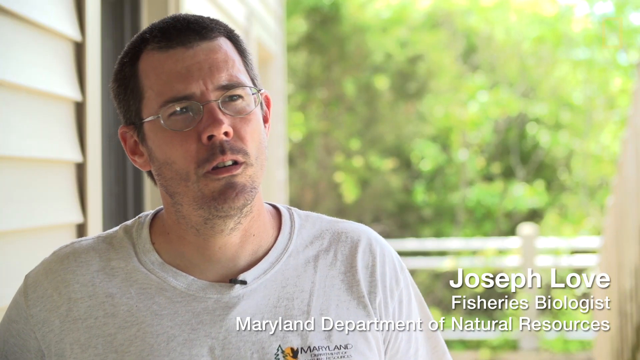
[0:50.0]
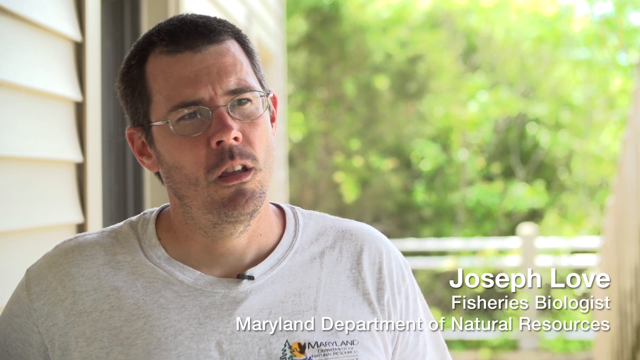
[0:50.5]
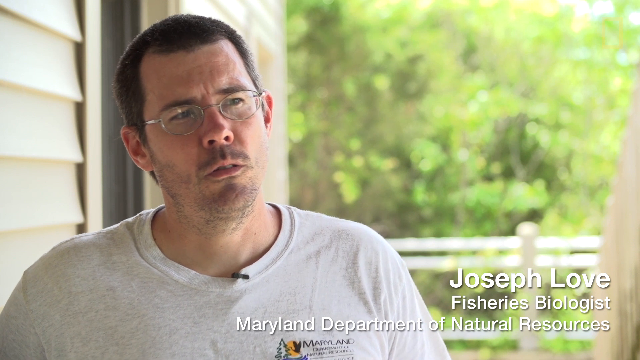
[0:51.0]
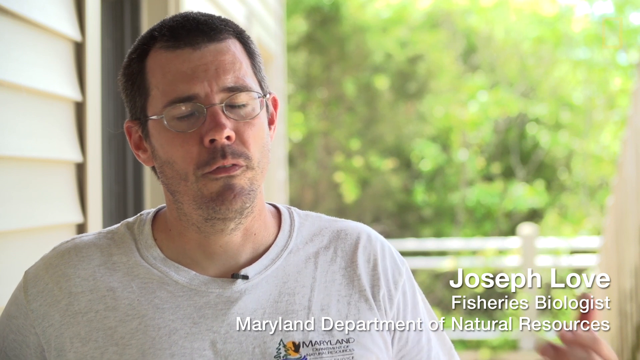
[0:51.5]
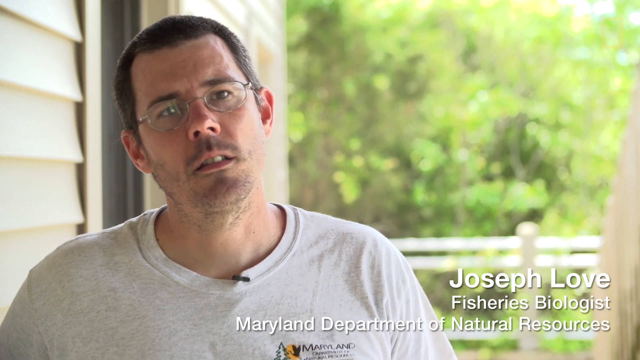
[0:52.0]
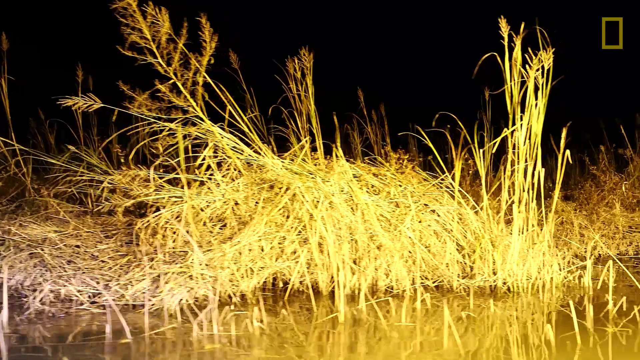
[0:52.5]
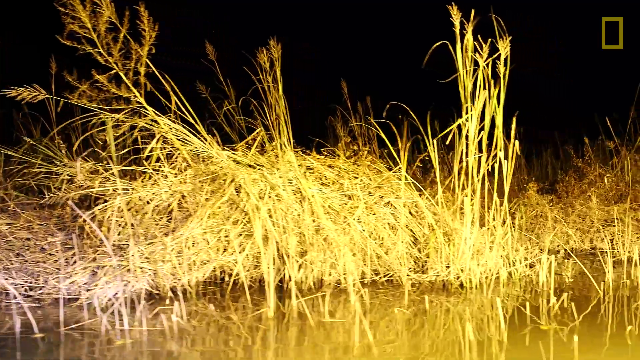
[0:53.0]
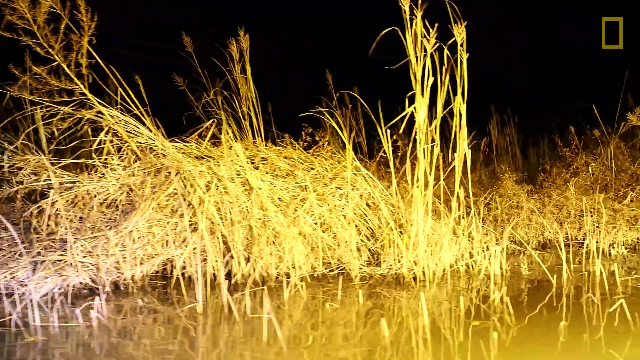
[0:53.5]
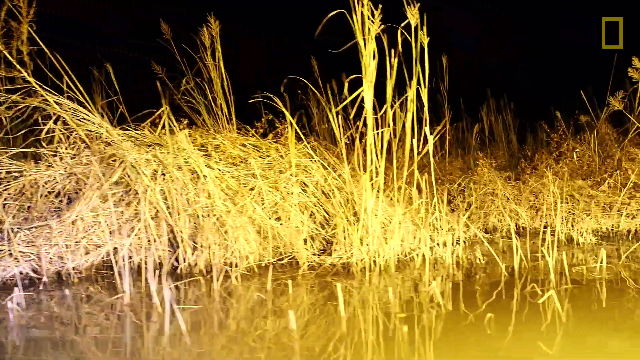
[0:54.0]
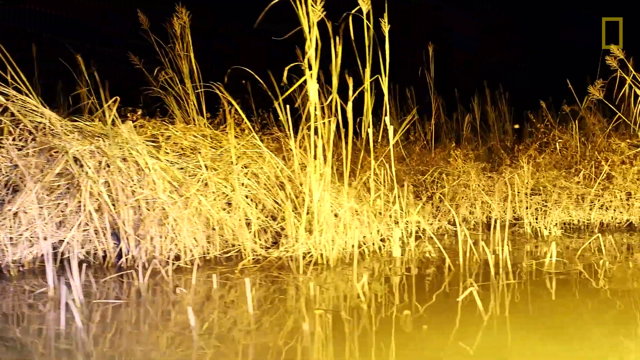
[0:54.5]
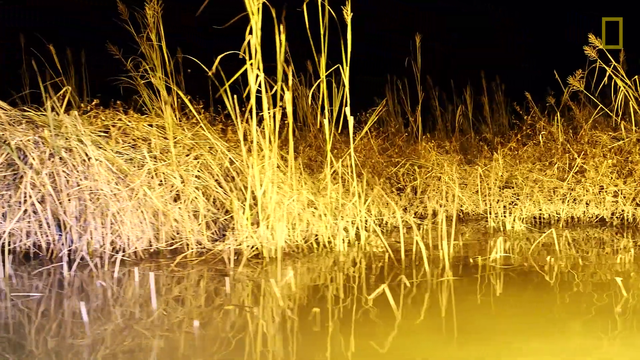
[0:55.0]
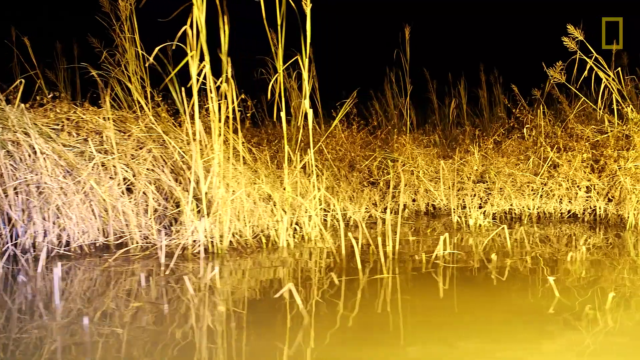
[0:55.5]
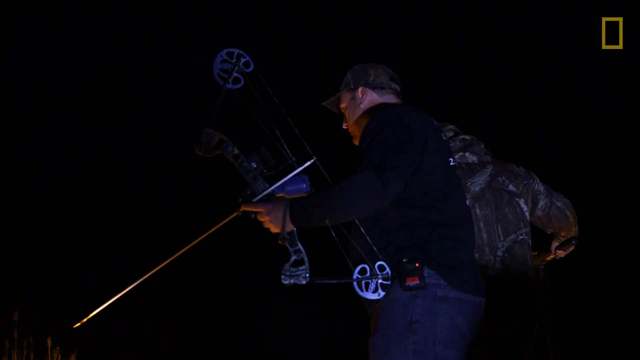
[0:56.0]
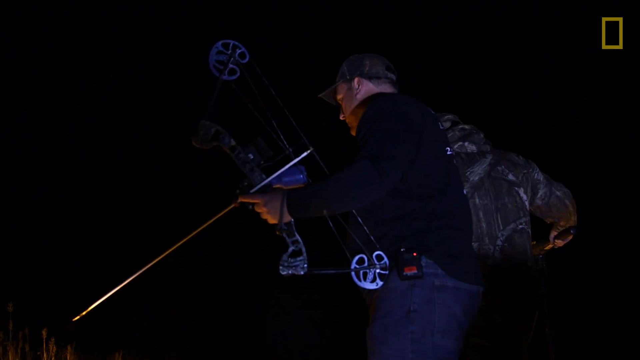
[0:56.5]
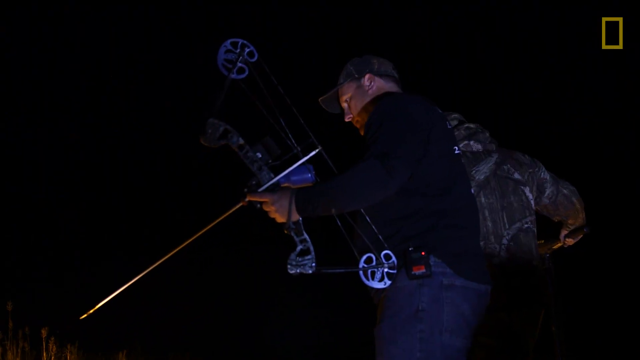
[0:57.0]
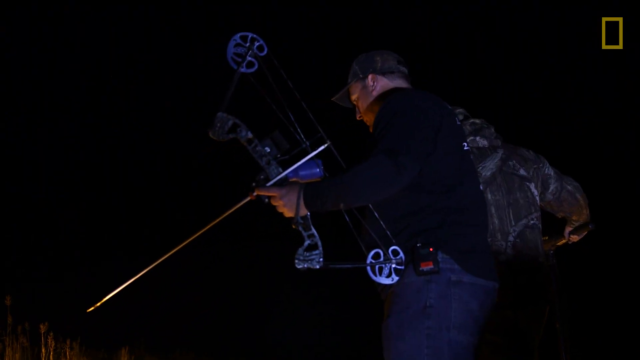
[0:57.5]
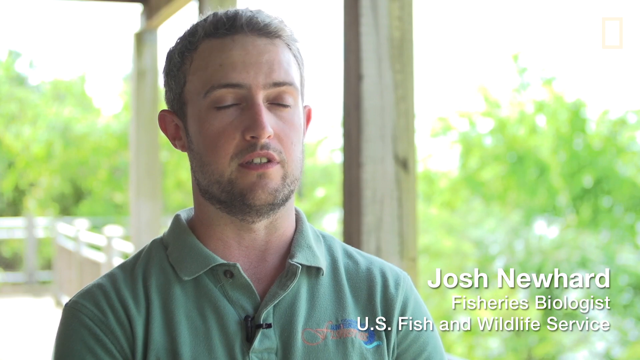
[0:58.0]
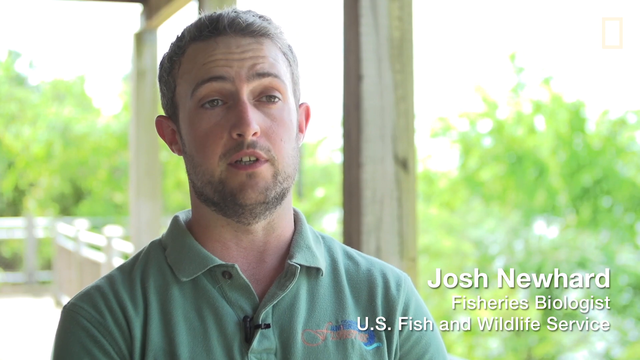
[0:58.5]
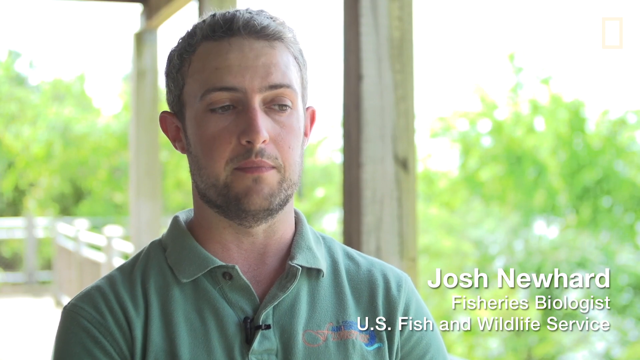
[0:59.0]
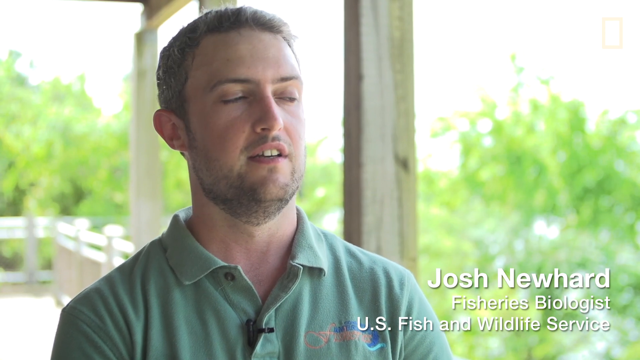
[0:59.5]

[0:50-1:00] A man is fishing. People from the U.S. wildlife and natural resources service appear, and the fish is referred to as the Frankenfish. The fish has something in its mouth that looks like it swallowed whole.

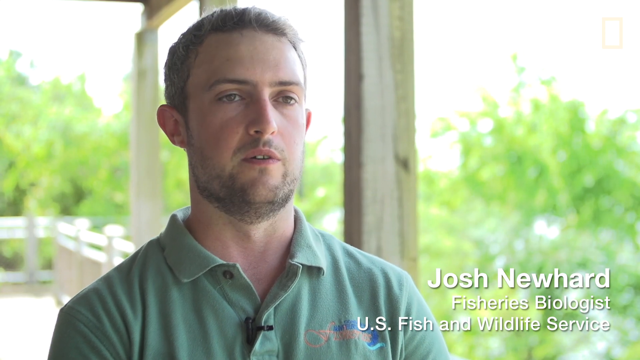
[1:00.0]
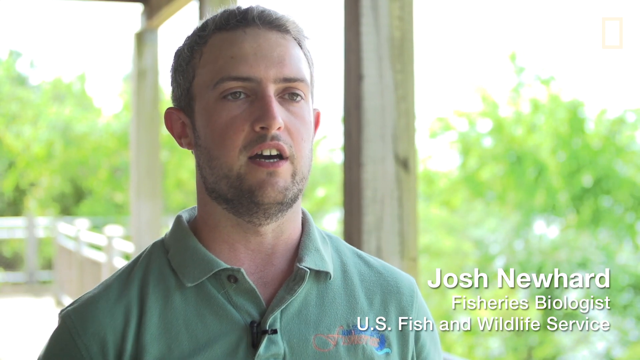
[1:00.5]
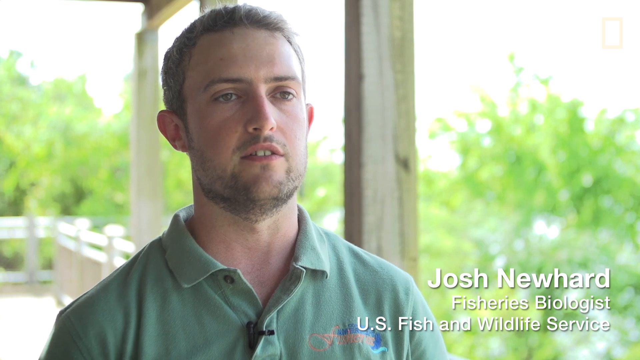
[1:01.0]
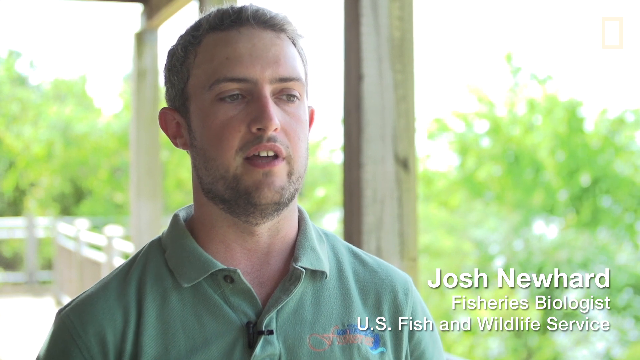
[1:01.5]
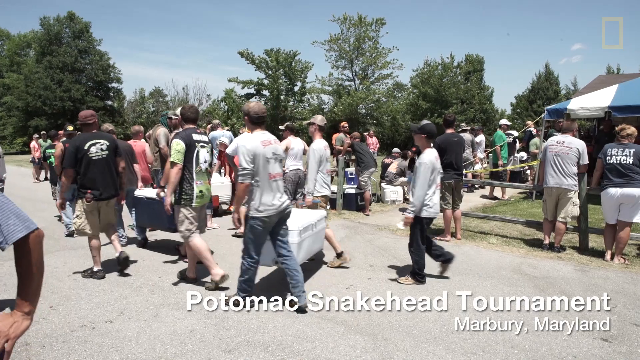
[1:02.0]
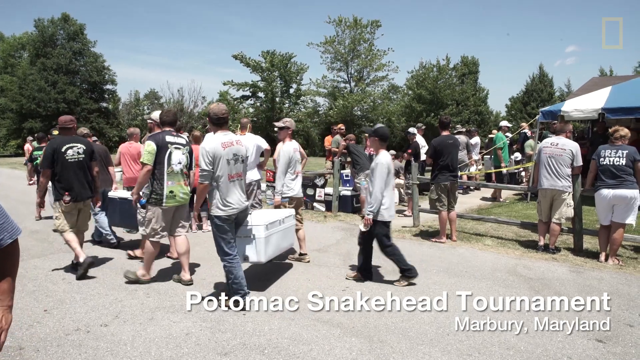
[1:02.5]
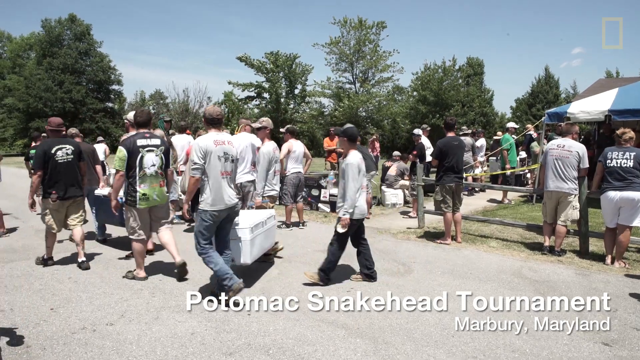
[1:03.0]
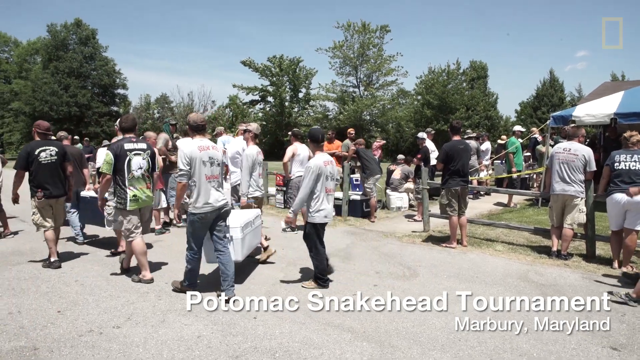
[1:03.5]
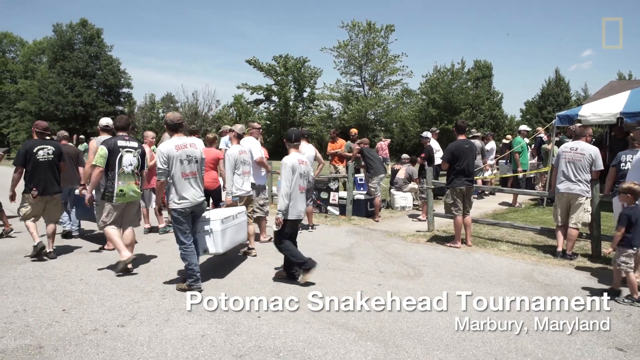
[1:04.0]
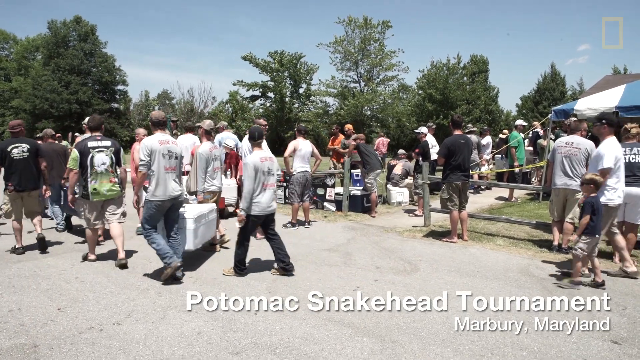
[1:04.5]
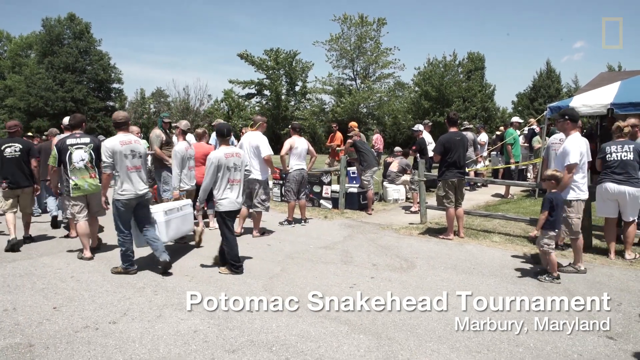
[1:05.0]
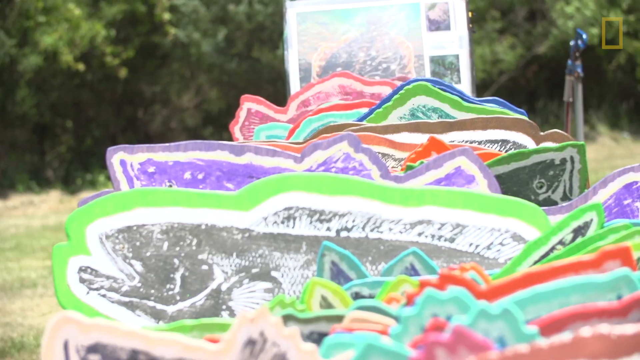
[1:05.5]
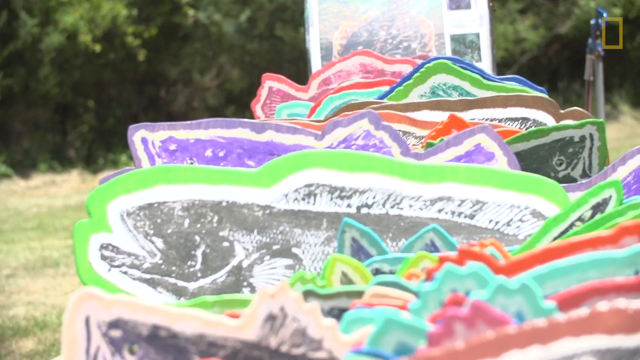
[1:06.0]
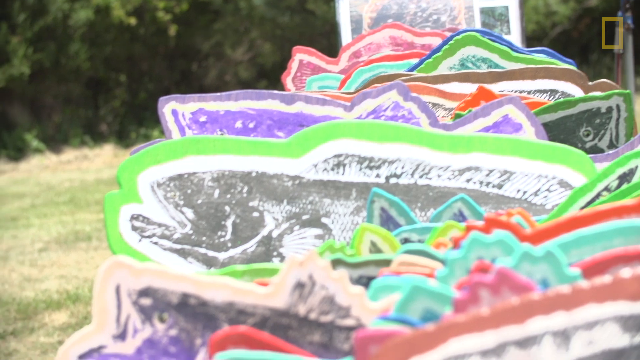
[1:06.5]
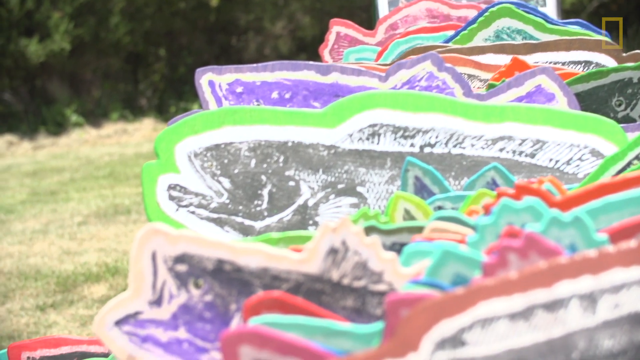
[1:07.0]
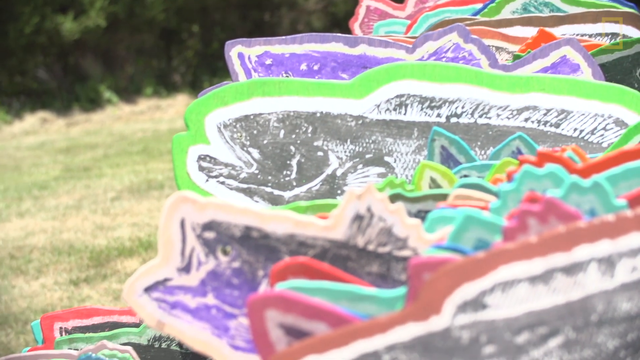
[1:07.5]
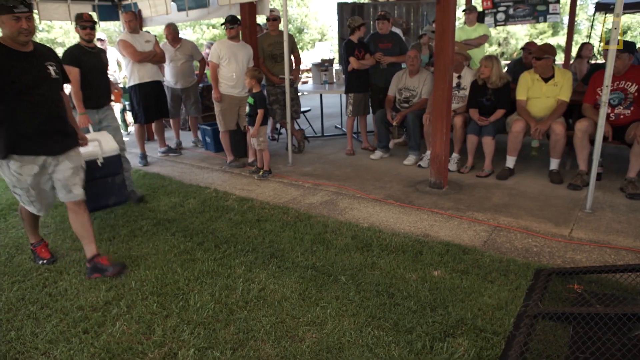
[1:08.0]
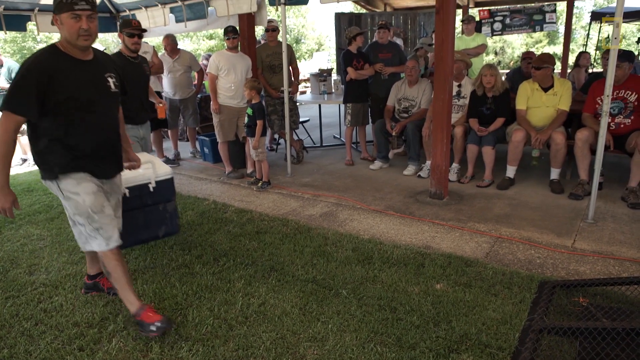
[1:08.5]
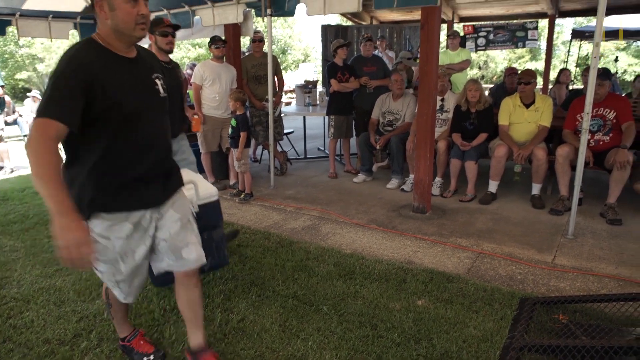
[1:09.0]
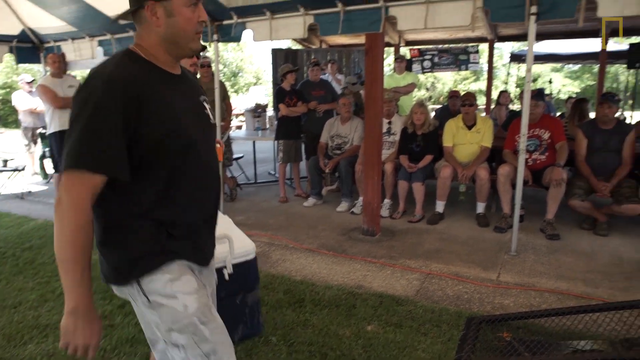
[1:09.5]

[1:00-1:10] At night, the men fish in murky water, looking through it with a light. They shoot the fish with a dart gun, open its mouth to show what is either its tongue or something it swallowed whole, and pull the fish up, showing it has been shot with the dart. Its skin has a patterned surface. Then people are shown at some type of fair.